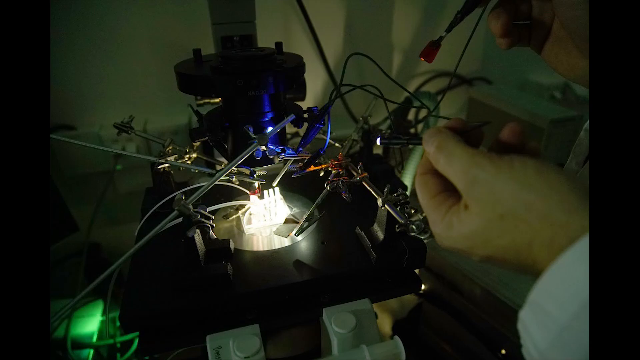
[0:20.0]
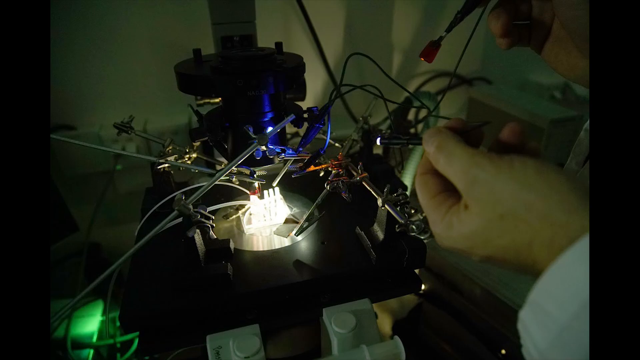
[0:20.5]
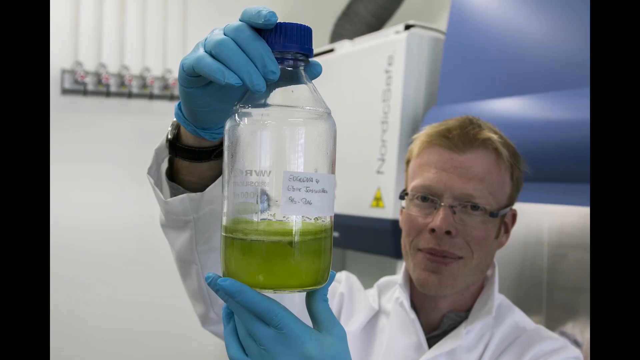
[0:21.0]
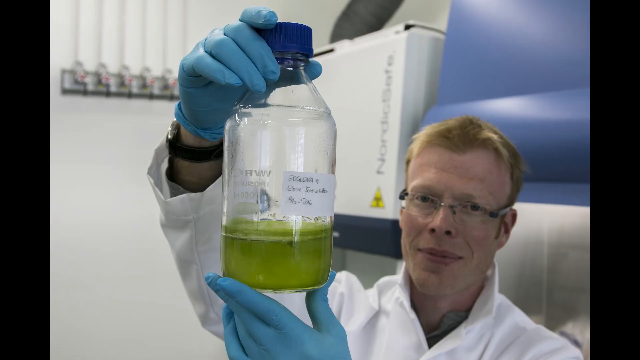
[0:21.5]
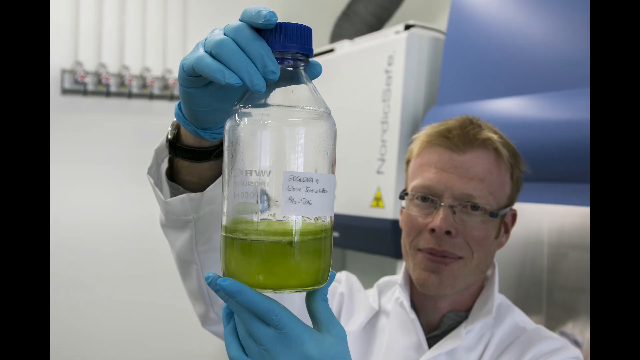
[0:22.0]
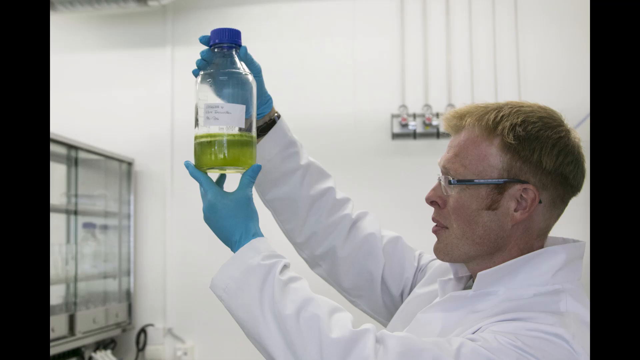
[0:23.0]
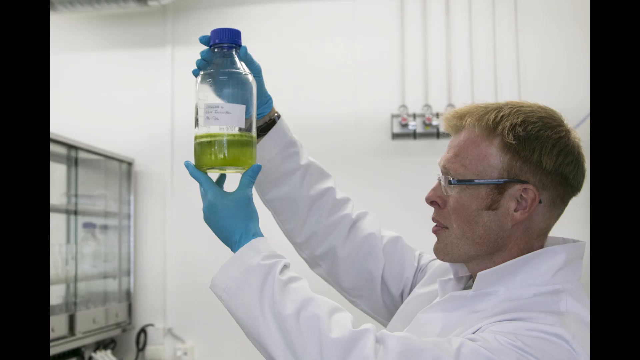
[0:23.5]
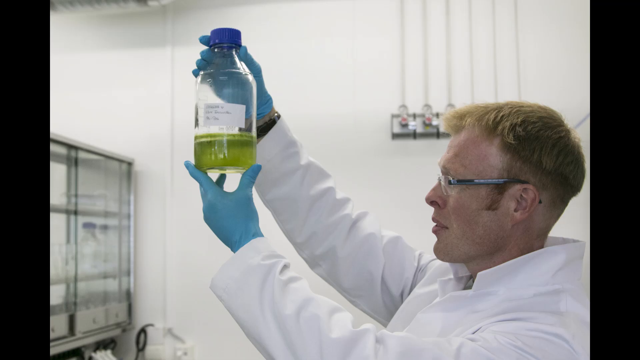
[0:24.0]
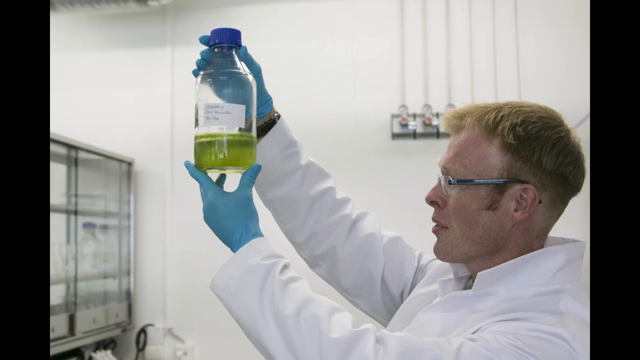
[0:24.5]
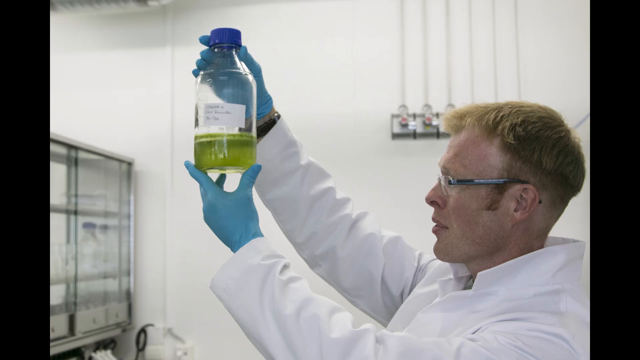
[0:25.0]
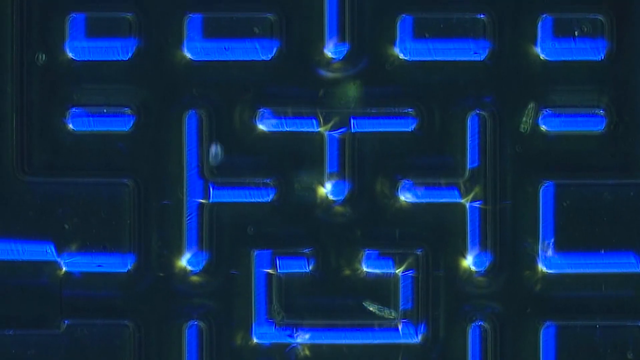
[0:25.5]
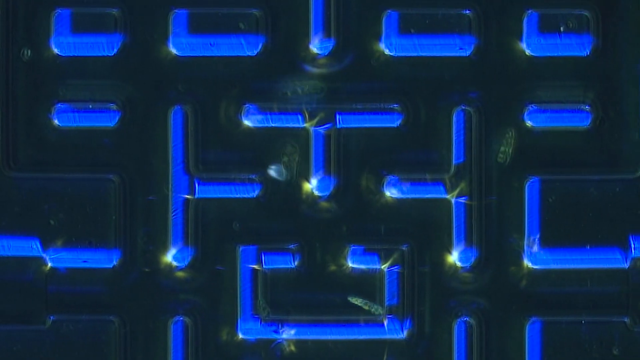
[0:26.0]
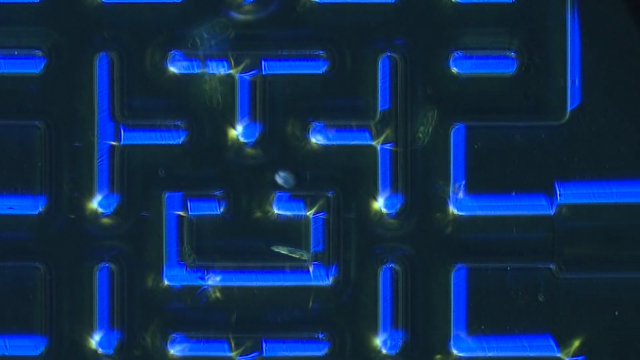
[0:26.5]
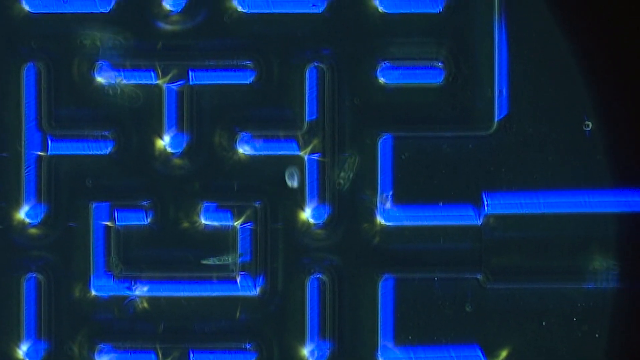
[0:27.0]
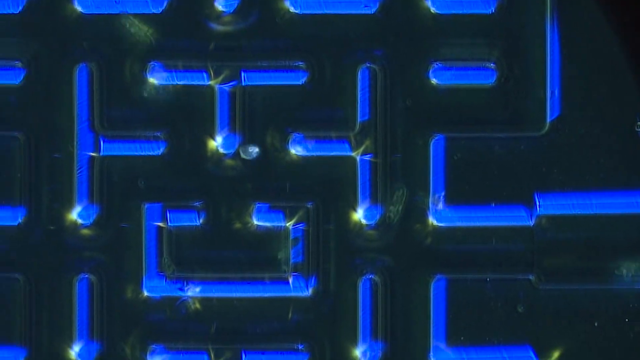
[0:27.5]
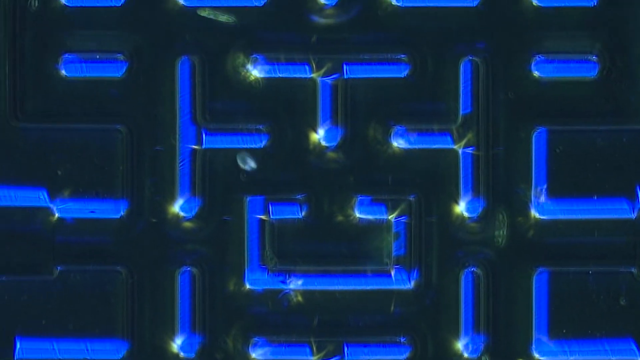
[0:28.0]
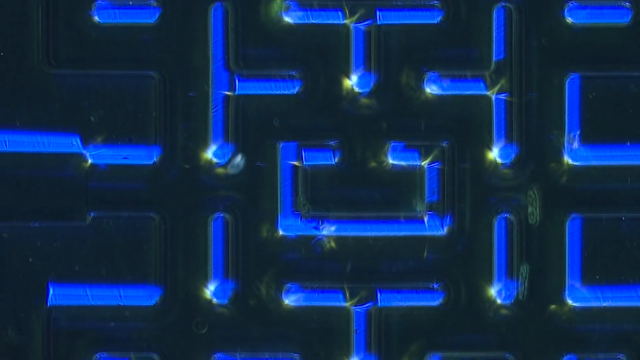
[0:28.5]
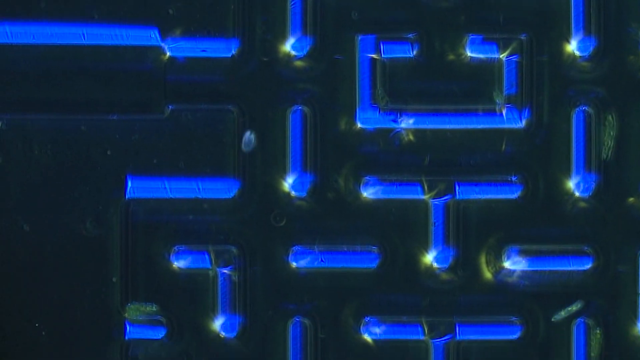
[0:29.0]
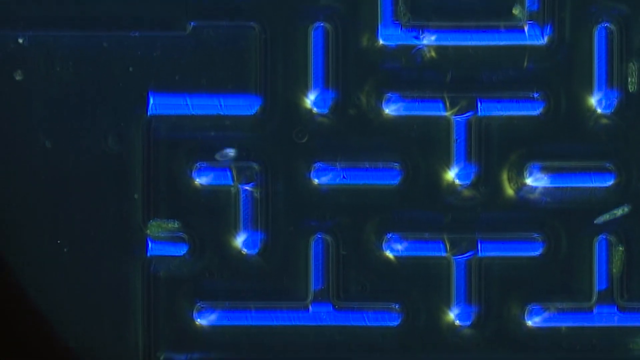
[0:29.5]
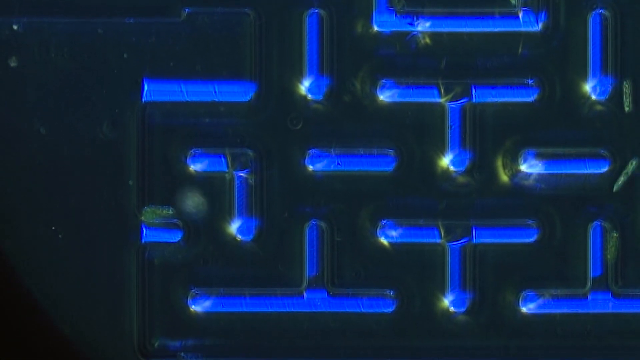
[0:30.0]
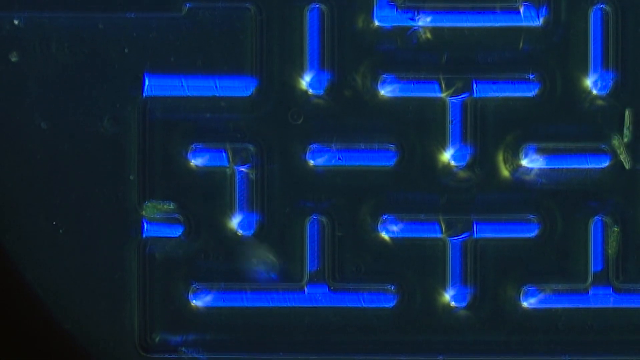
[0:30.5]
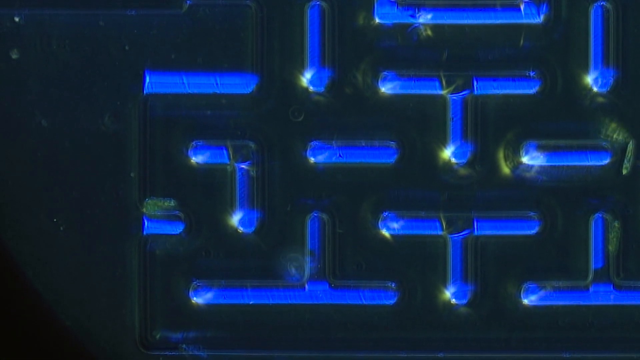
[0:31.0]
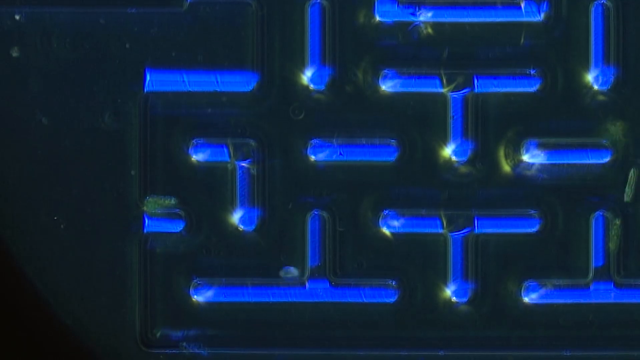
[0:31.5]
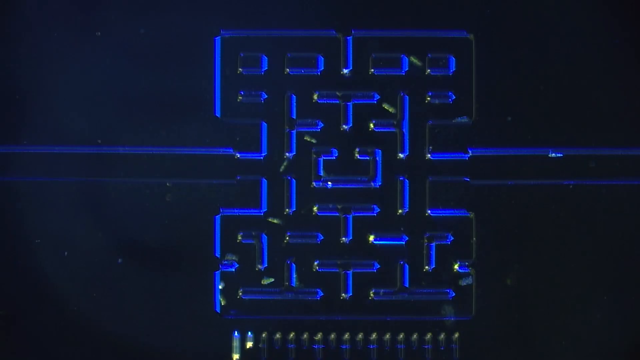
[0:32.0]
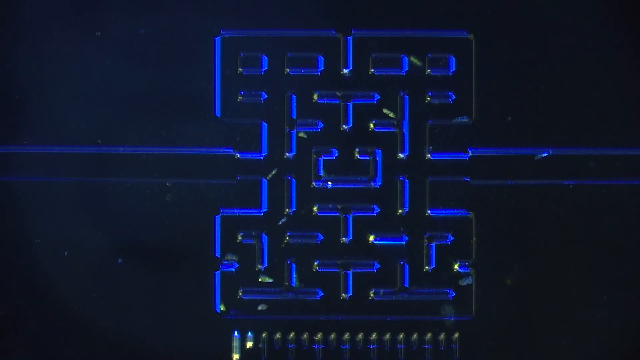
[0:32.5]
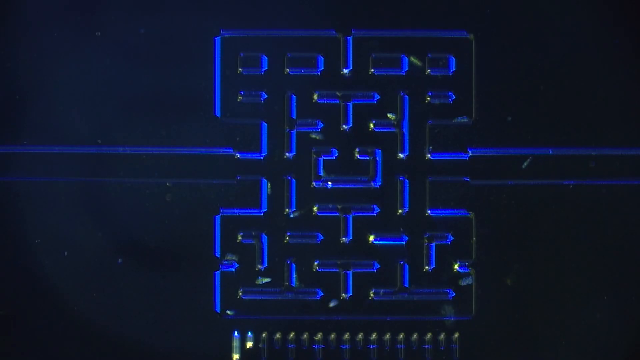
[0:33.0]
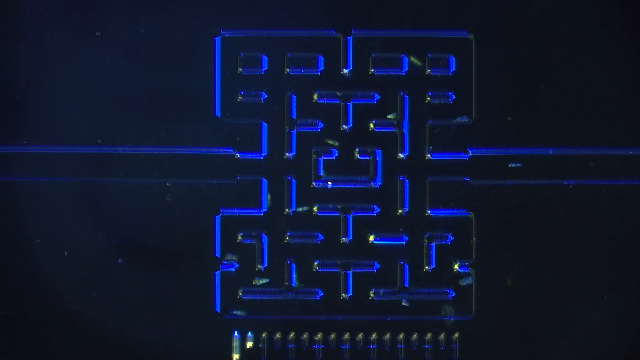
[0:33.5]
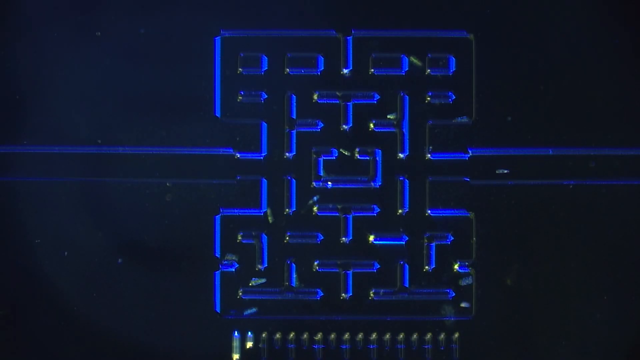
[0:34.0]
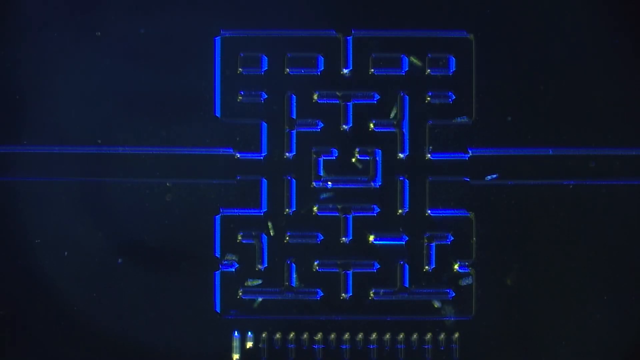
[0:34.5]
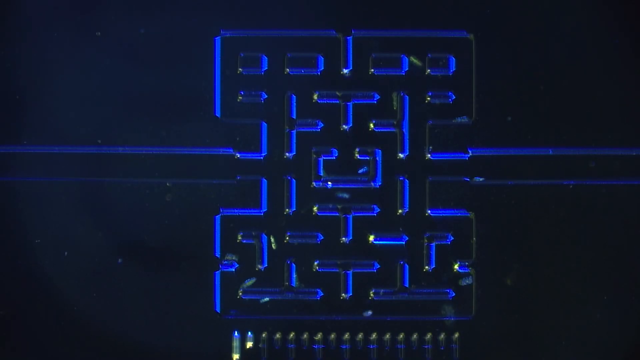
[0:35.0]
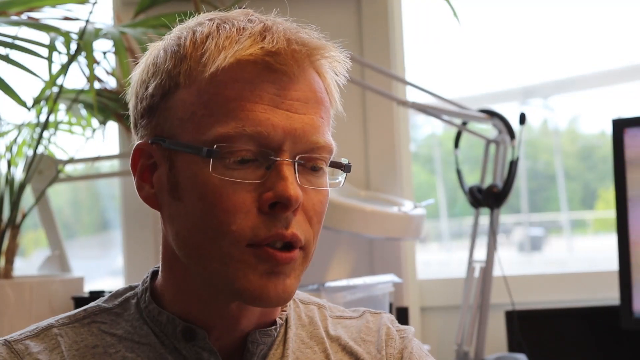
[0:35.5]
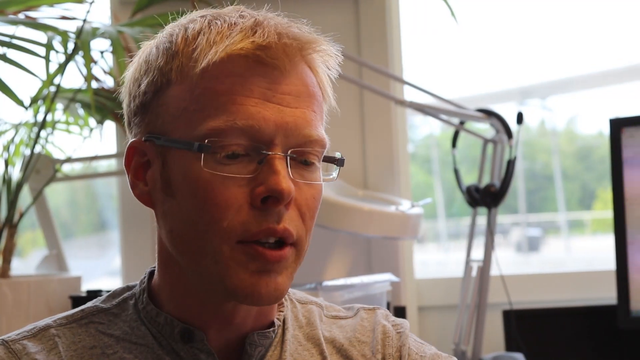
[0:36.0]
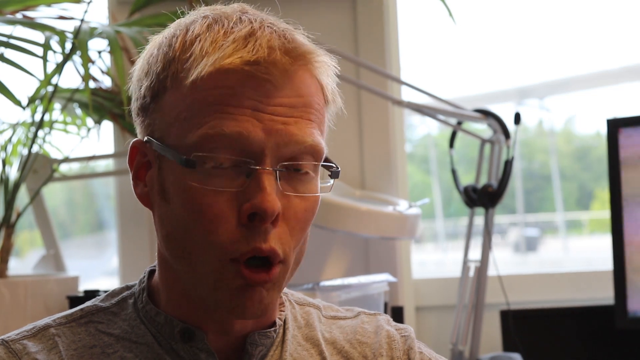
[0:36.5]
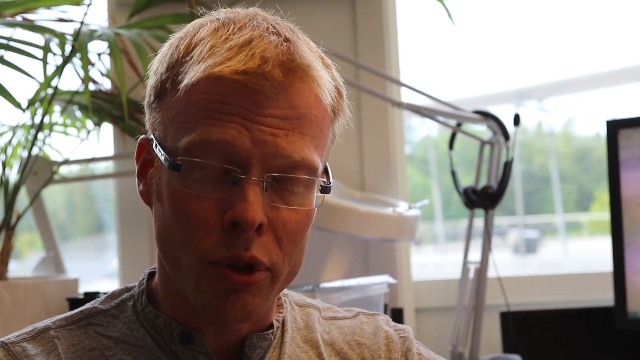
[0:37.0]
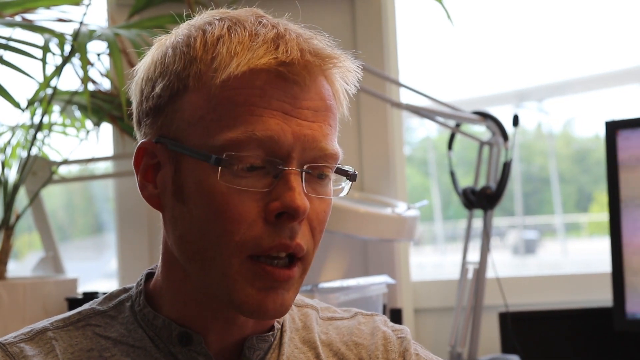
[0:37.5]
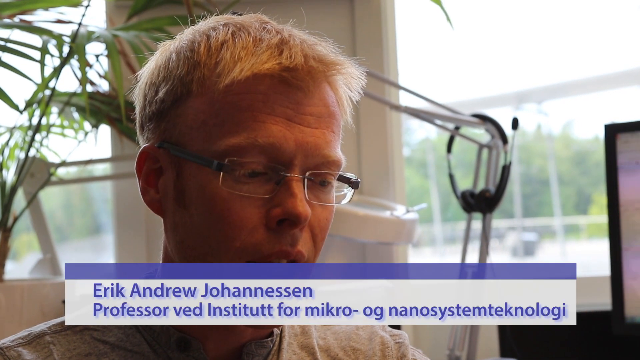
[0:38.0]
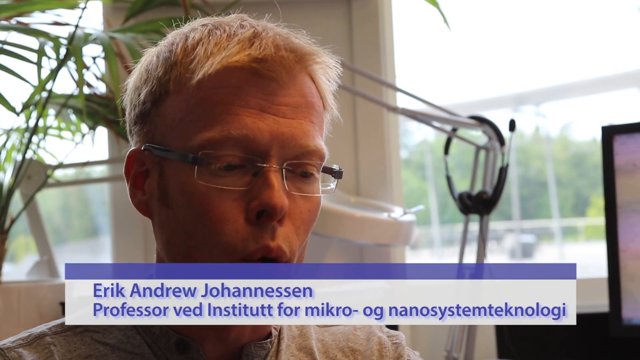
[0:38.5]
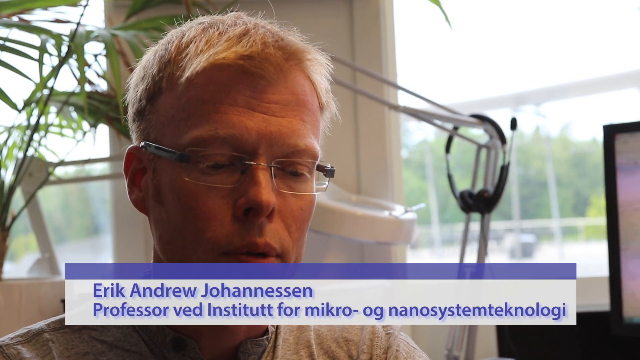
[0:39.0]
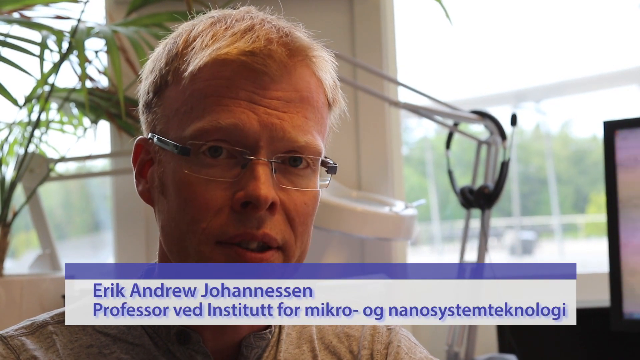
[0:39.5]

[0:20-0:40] The image of the scientist interacting with the wires transitions to a different image of another scientist holding up a bottle to the camera. The bottle has a blue cap and some sort of thick liquid inside, and a label on its side appears to have handwriting on it. The same scientist is then shown from his left side, still holding up the bottle. Video footage follows of a small shape moving back and forth in a Pac-Man-like maze: it goes first to the right, then to the left, colliding with the walls, then goes down, passes through a small opening and continues down, colliding with the walls some more. It goes along the left side and the corner, then right again, and momentarily goes out of focus. The camera zooms out to show the full maze, with the small shape visible at the bottom left, continuing to the right, and other shapes moving around all along the maze-like structure. The view then shows the scientist who held up the bottle; he has rectangular glasses and short hair. He looks off to the right while speaking, looks directly at the camera, then looks back off to the right. A name appears at the bottom reading "Eric Andrew Johanson", with text in a foreign language below it.